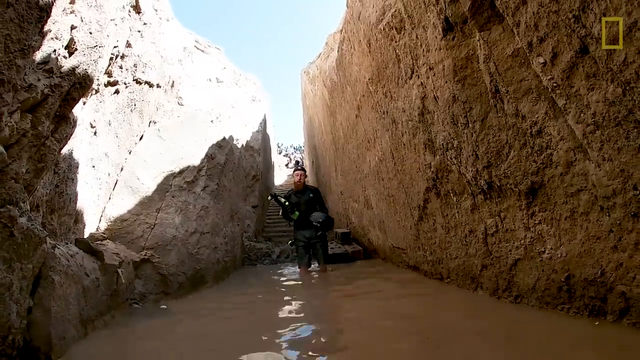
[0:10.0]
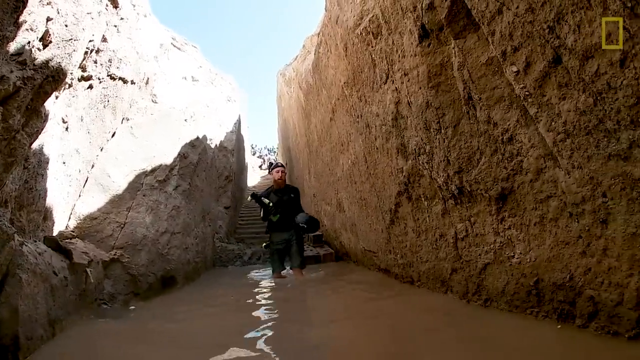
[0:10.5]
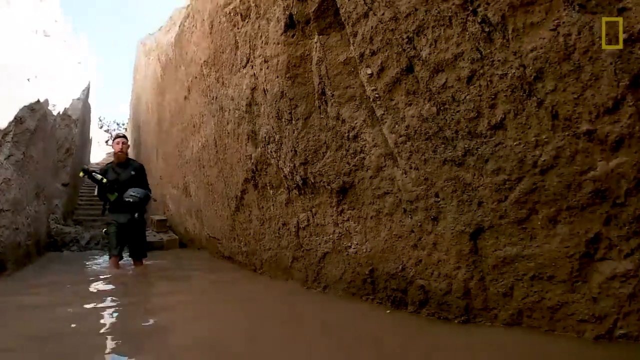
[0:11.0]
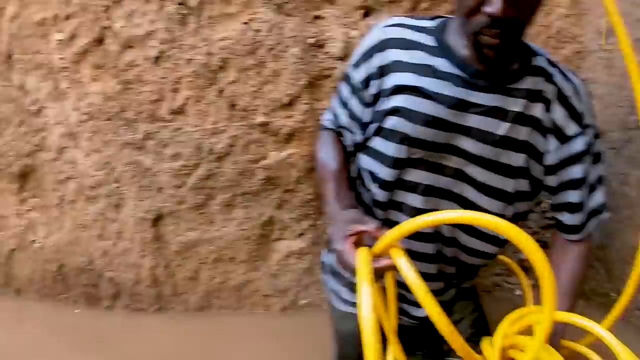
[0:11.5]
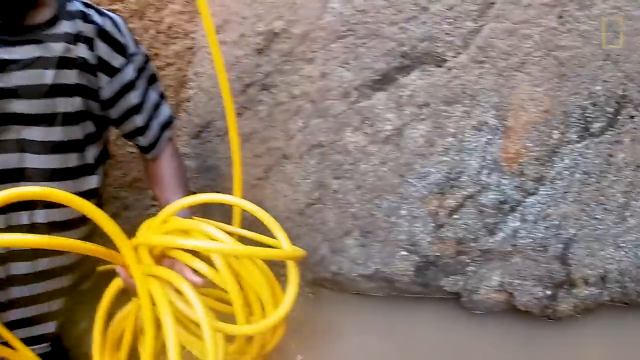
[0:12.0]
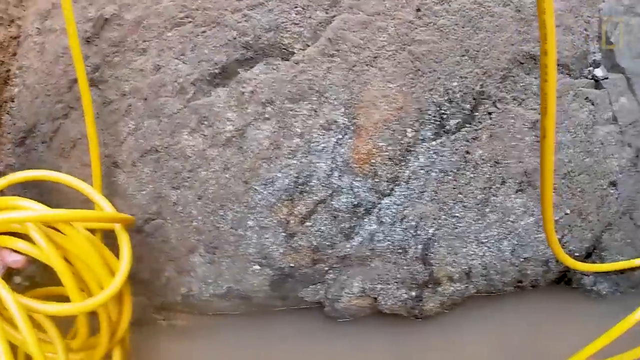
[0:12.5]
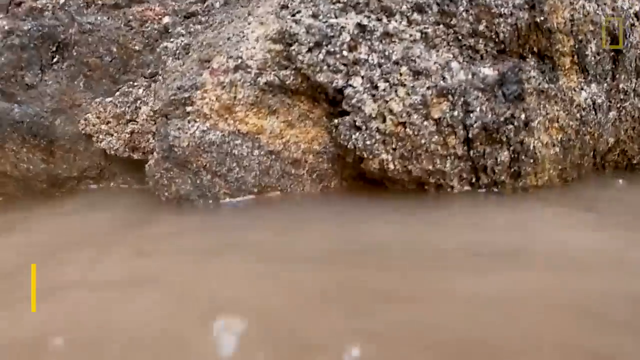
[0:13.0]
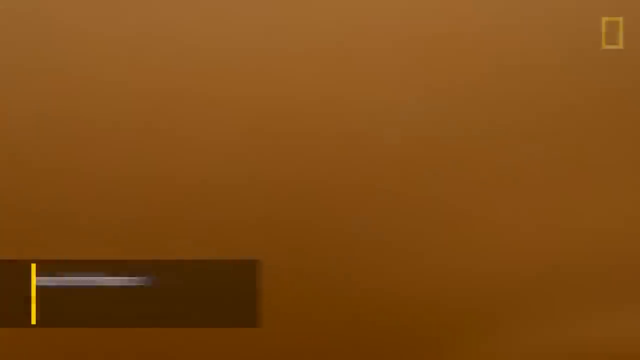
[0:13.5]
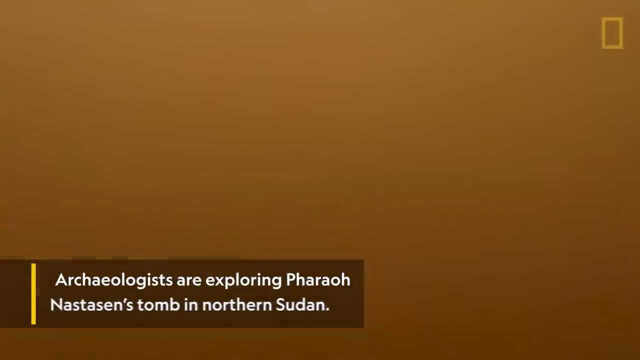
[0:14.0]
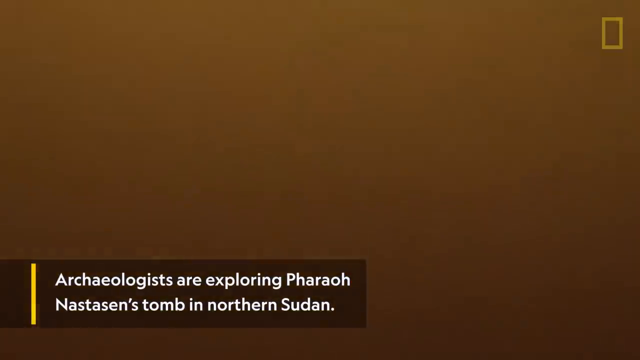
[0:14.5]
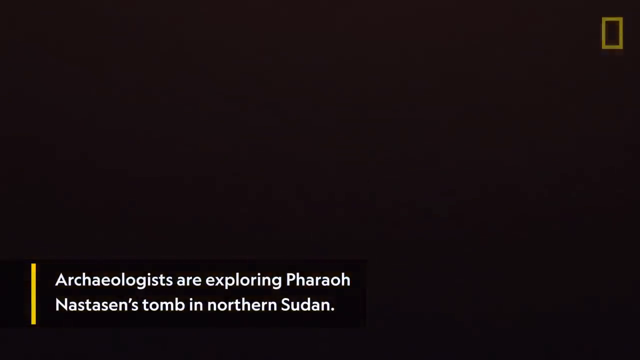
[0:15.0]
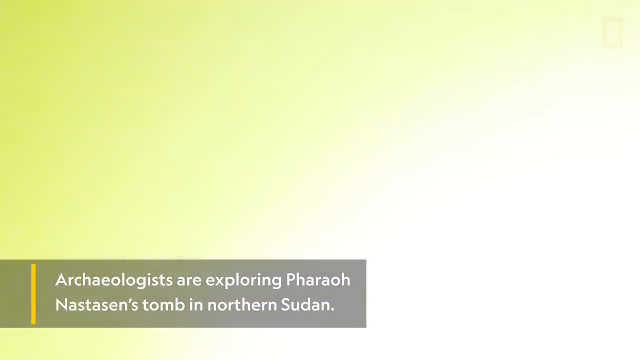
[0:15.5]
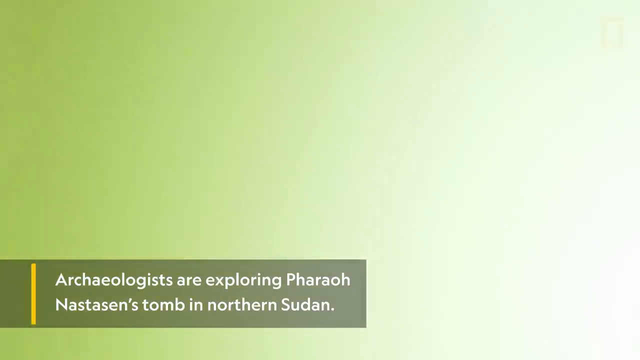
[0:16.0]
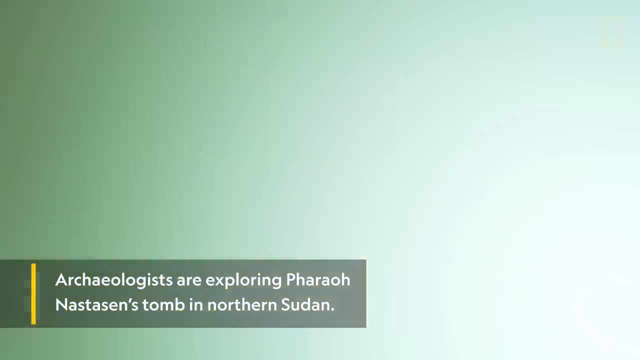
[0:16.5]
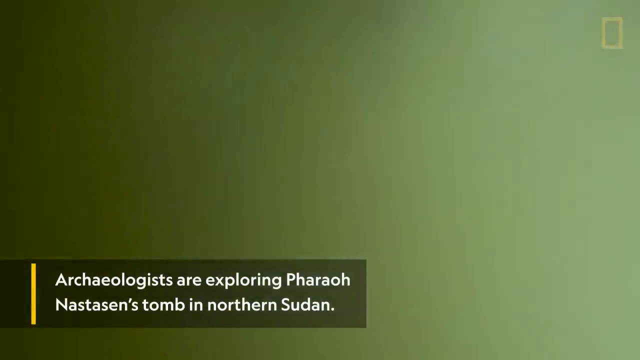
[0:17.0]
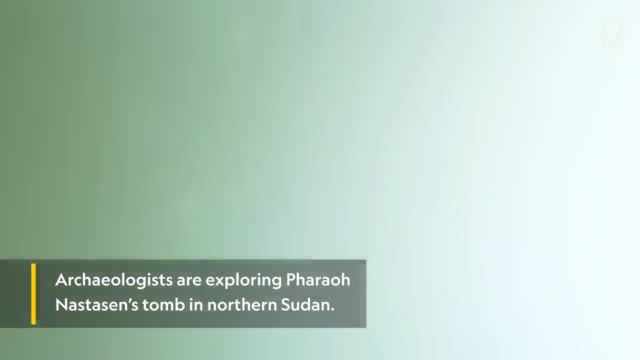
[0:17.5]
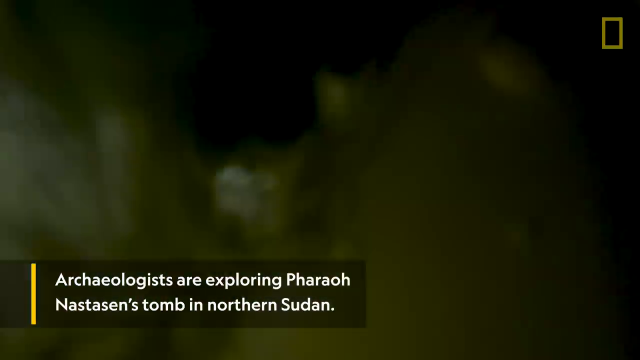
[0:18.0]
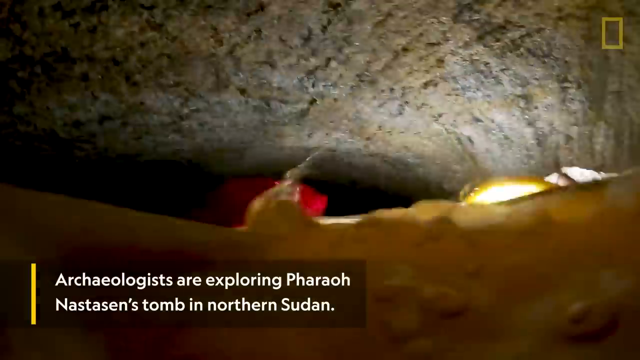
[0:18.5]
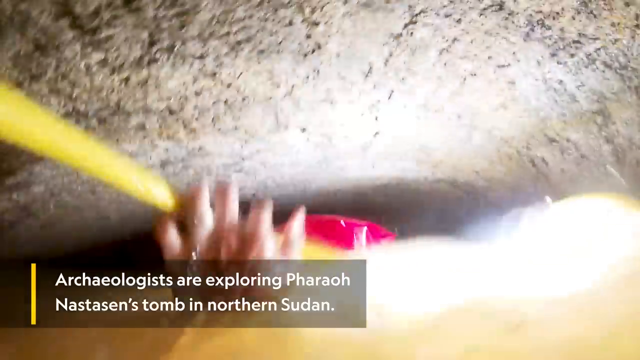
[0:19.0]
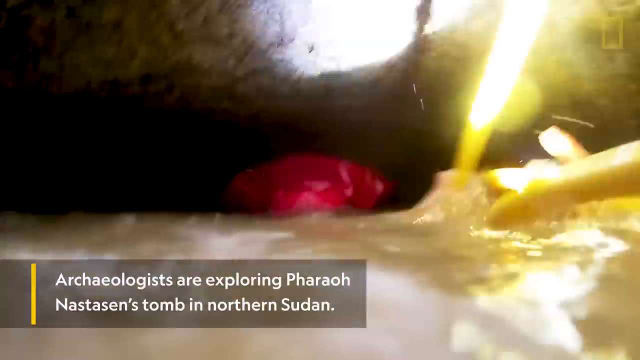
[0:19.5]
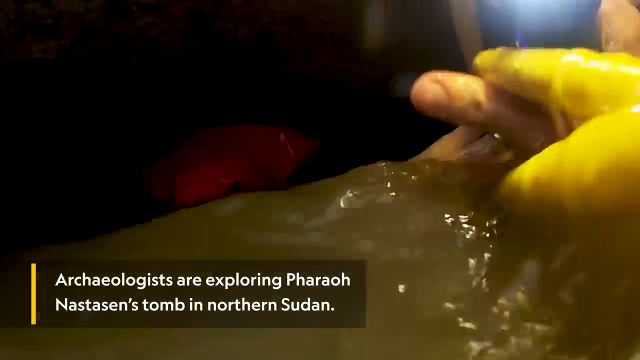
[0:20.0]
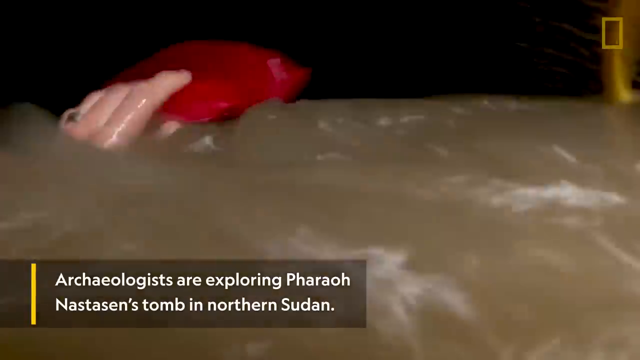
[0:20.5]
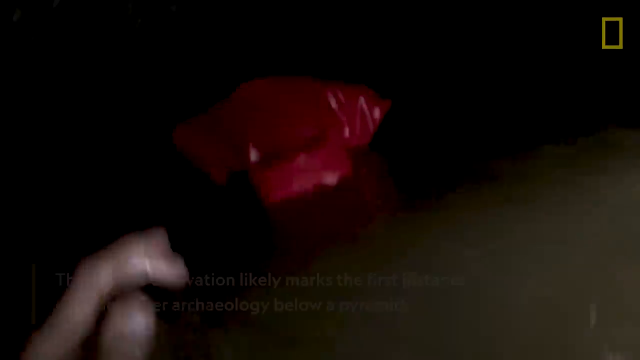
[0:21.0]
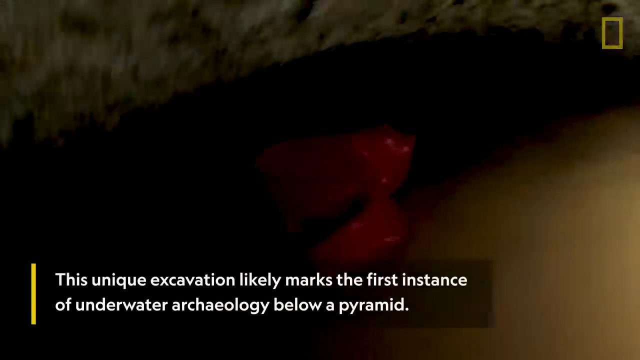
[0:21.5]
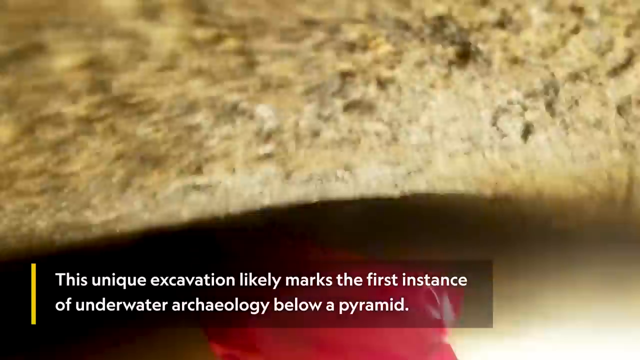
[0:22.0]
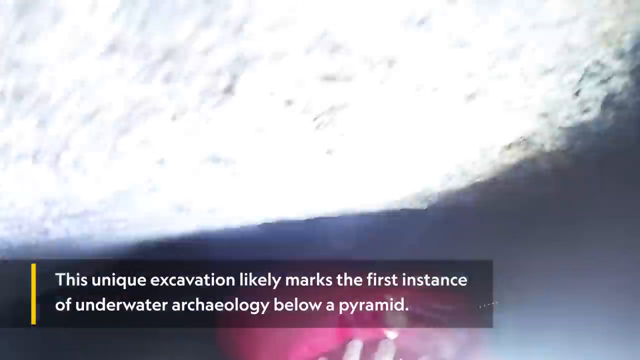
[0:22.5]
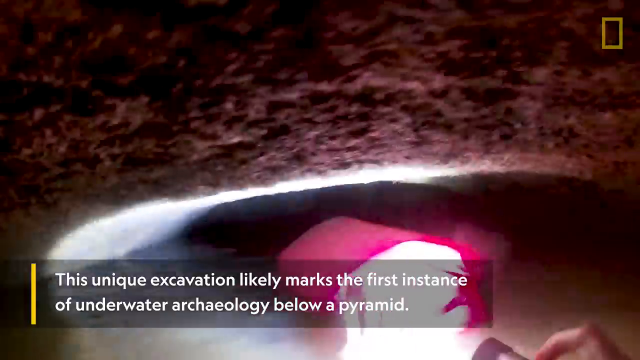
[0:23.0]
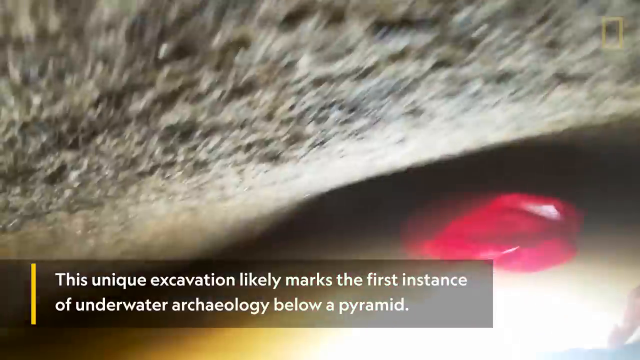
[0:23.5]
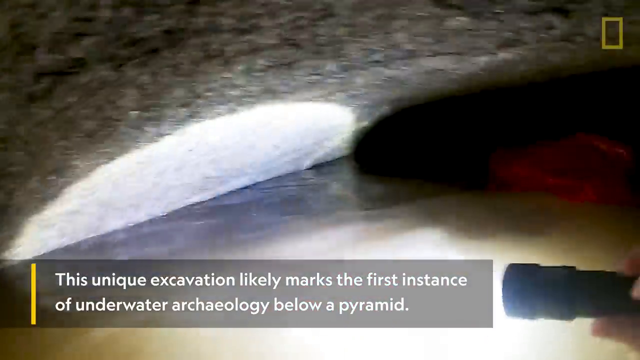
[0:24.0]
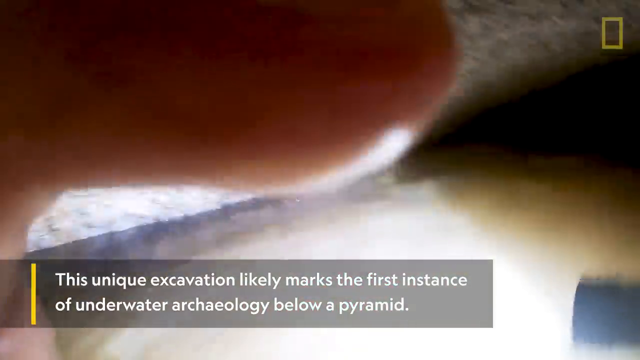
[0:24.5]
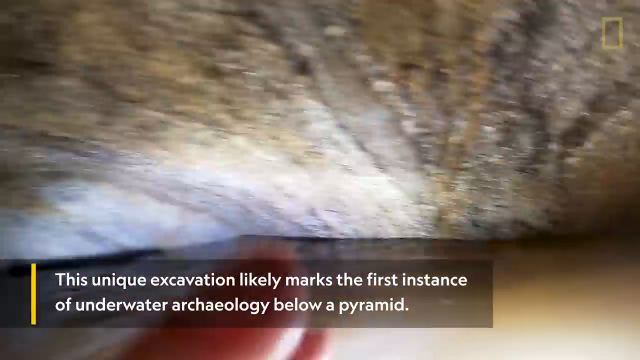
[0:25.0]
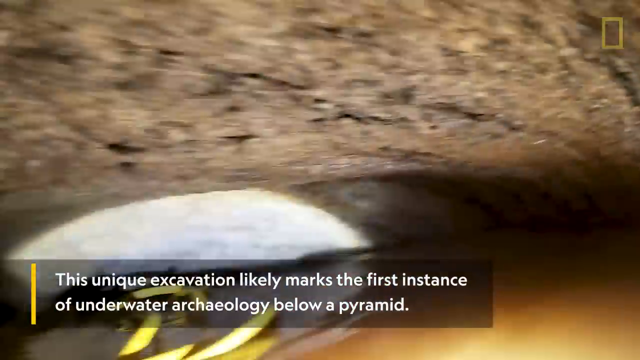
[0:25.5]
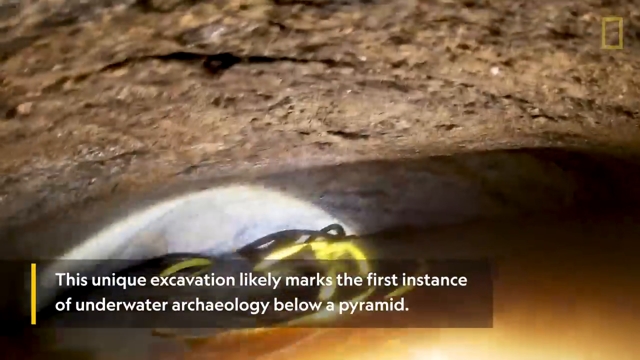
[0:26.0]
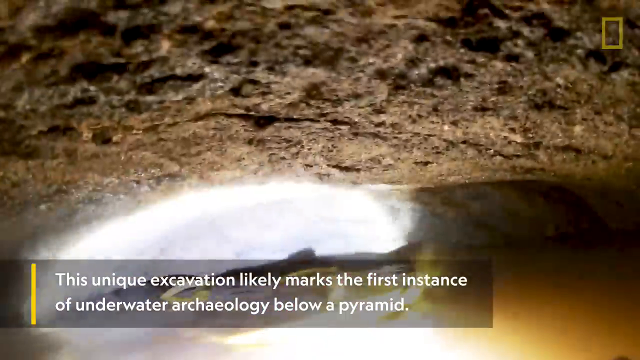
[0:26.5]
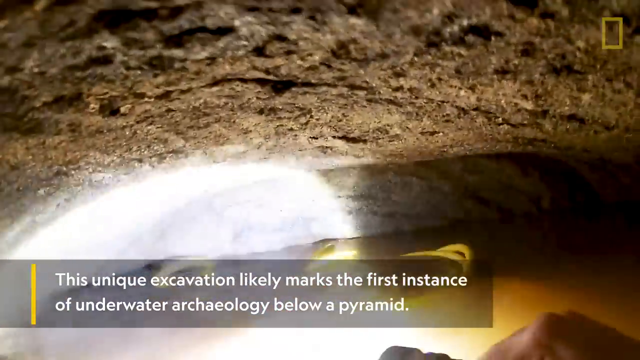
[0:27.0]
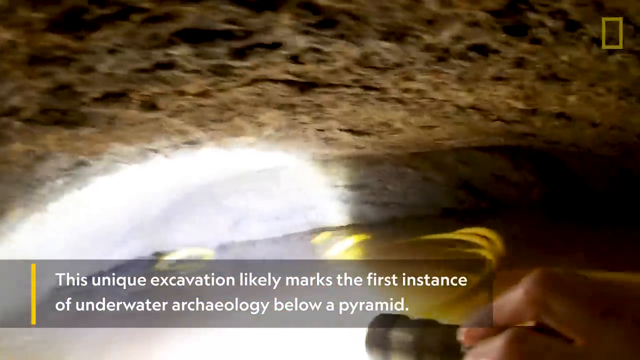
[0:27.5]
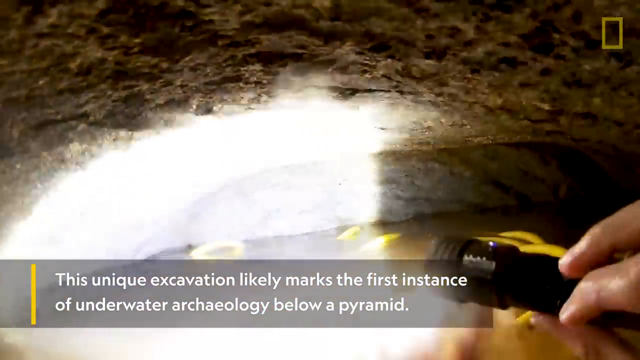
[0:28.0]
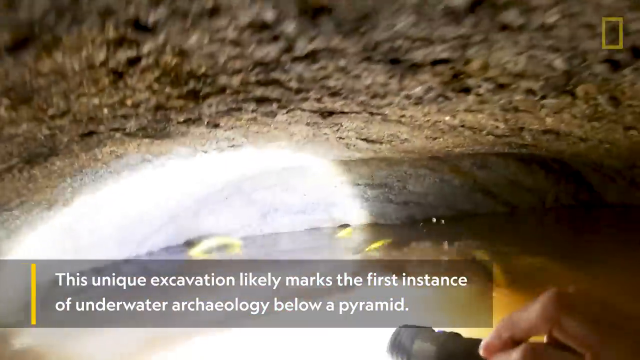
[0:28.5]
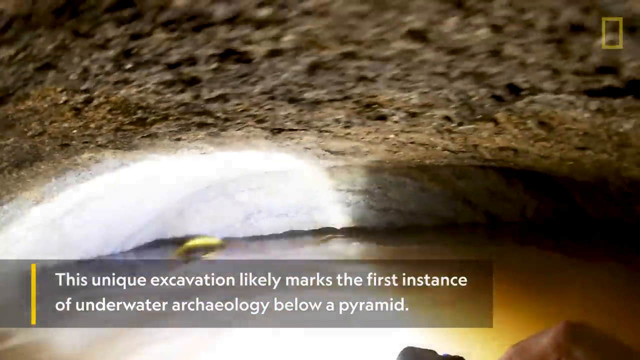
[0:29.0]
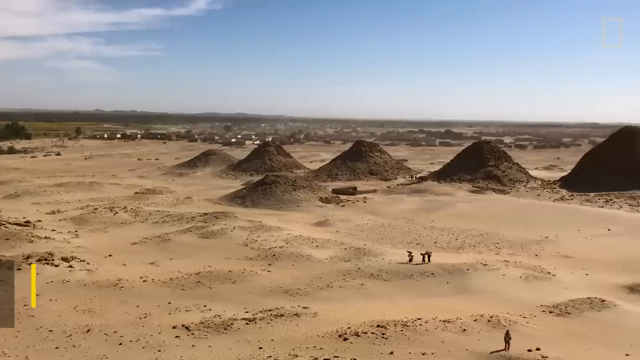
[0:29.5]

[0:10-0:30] The explorer, with his expensive camera equipment, is underwater doing cave exploration as part of a team. It is dark in the cave area, but he has a lot of light and shines his flashlight on the cave walls. The water is very muddy and does not look clean at all, and there does not seem to be any marine life in it. The man helping him wears a gray and black striped shirt; he looks middle-aged, has a stocky build, and holds a yellow hose. There is a red bag with something in it, possibly some type of video equipment, which he is pushing.